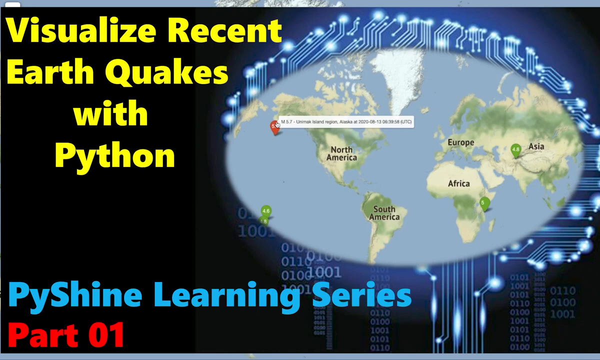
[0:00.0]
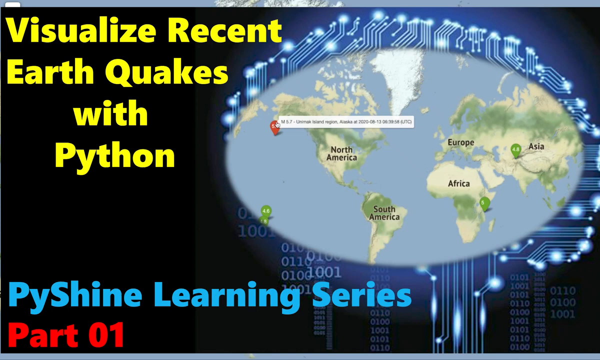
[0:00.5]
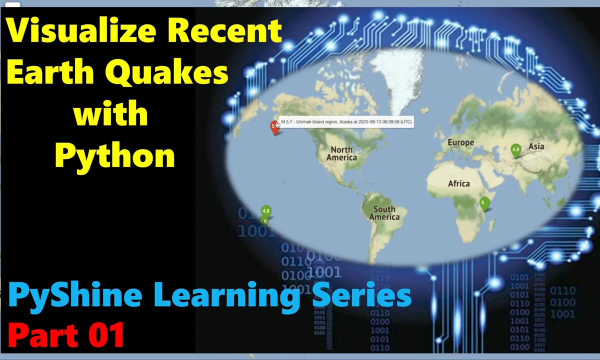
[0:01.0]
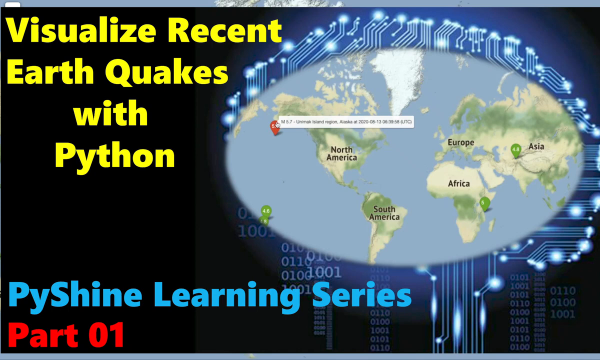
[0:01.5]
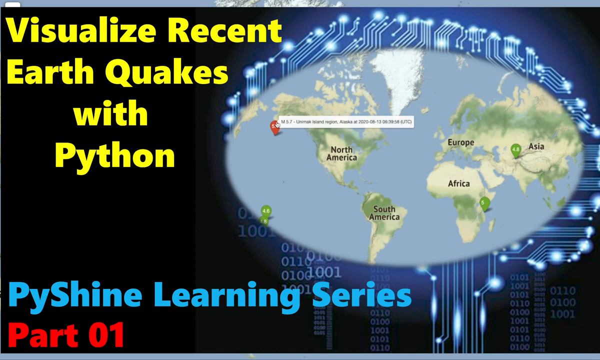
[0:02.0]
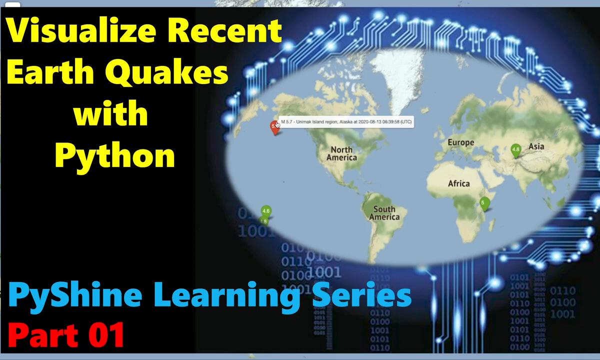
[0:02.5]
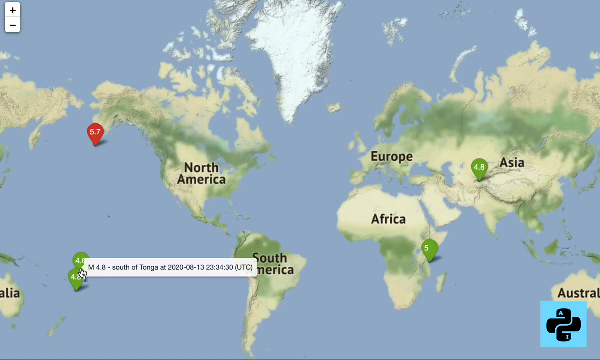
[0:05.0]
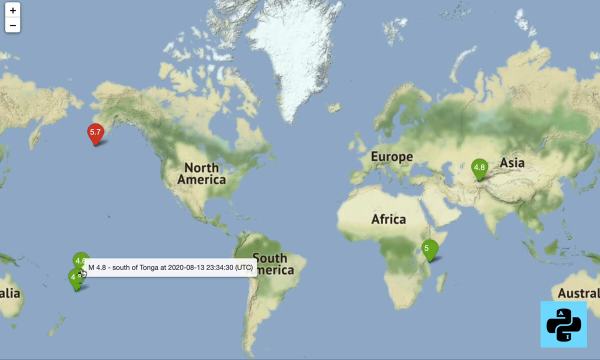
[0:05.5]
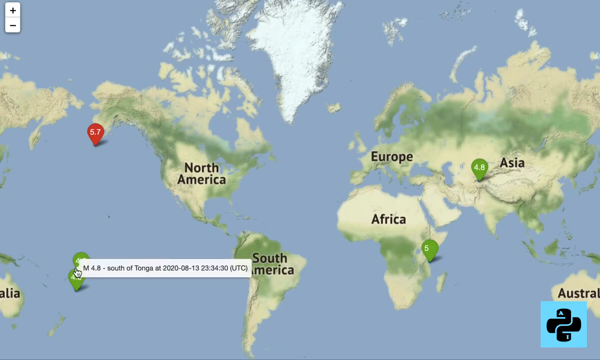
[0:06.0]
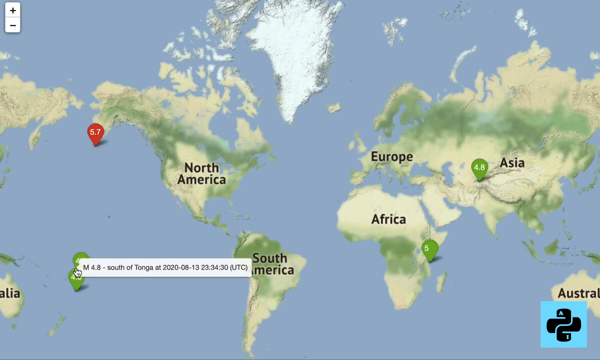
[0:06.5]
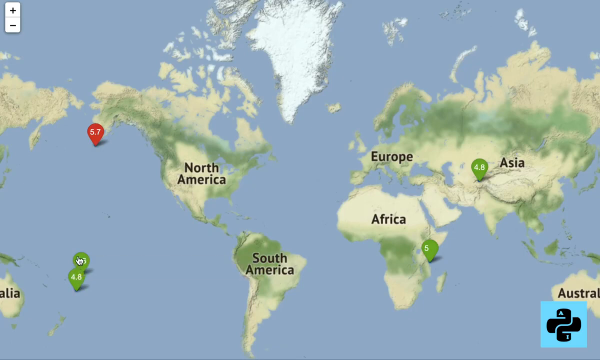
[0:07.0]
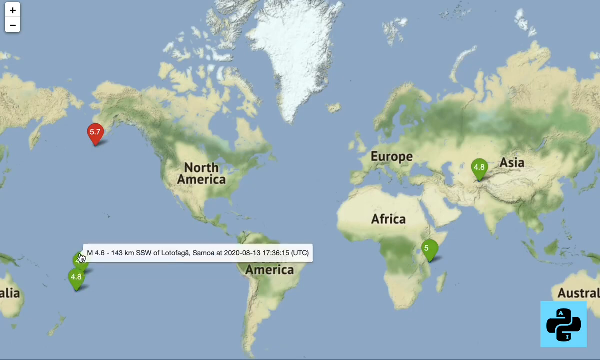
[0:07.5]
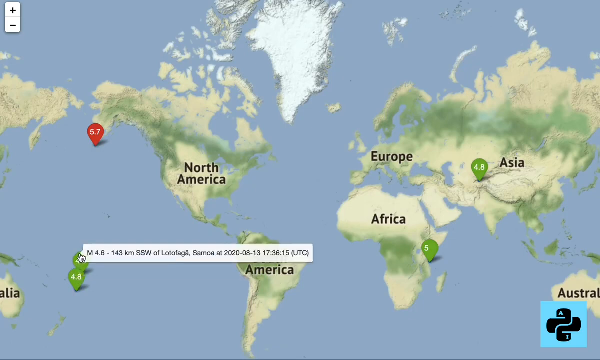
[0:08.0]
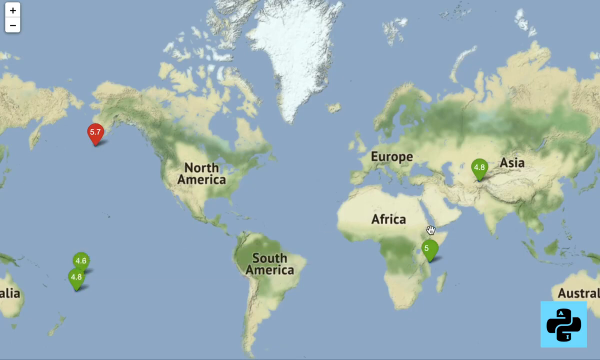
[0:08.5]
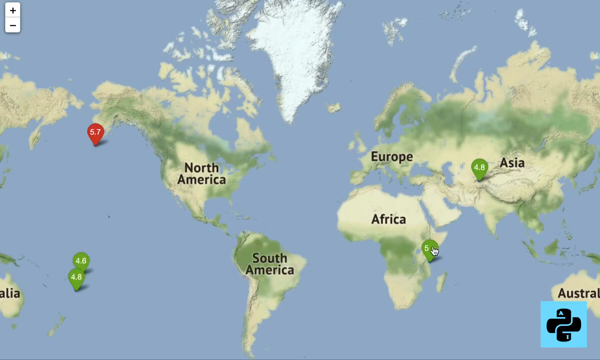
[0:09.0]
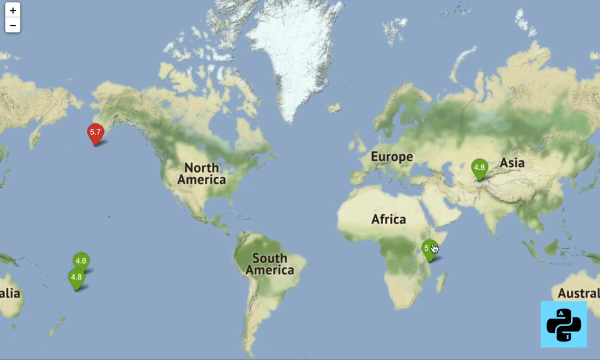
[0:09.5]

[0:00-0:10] What appears to be a slide, possibly for a science class, reads "visualize recent earthquakes with Python" in bold yellow text. Below it is kind of a flat image of the earth, with "learning series" in blue at the bottom, and some kind of electrical blue currents come from behind the flat globe-like image. The view then zooms in closer, showing North America, South America, Africa, Europe and Asia, with a red dot near Alaska and some green dots in the ocean near Australia.